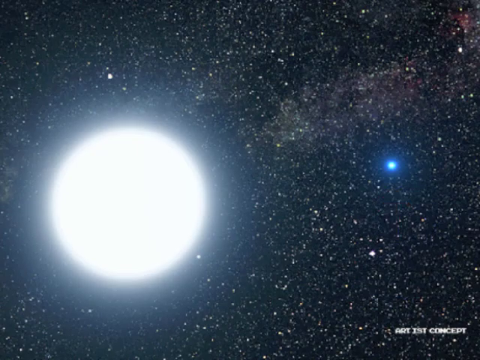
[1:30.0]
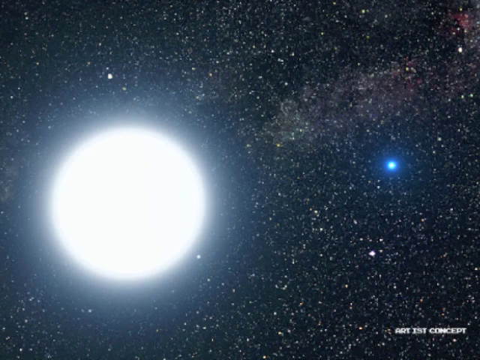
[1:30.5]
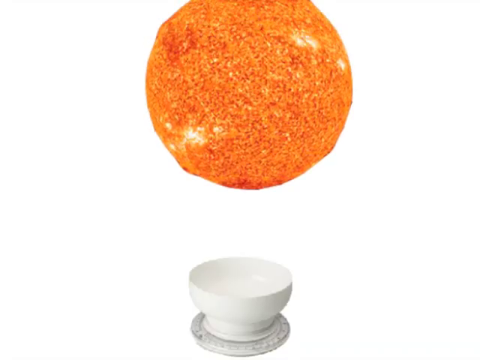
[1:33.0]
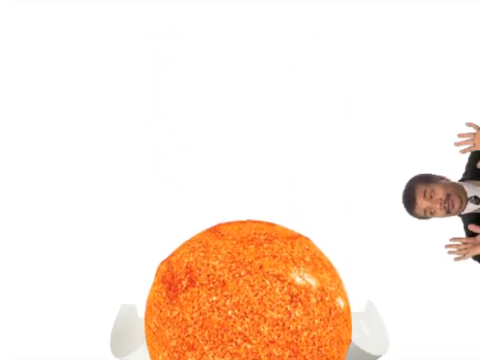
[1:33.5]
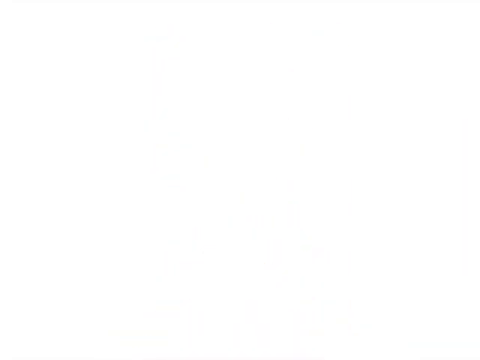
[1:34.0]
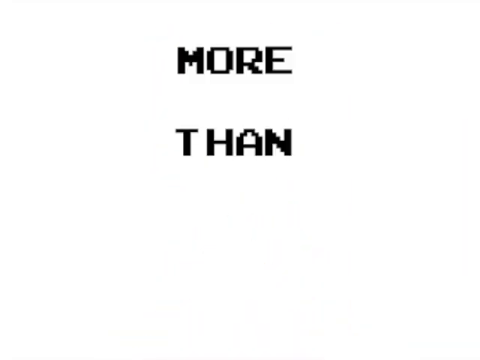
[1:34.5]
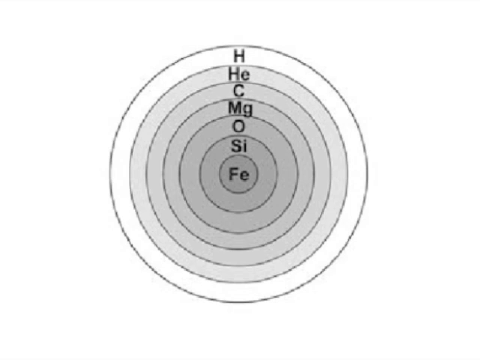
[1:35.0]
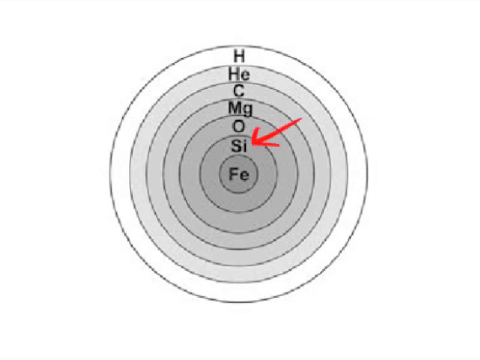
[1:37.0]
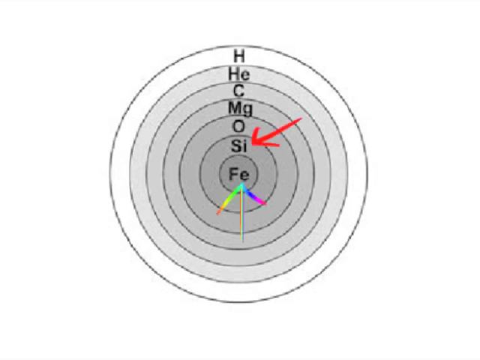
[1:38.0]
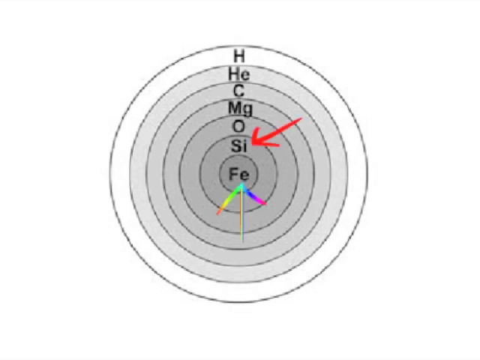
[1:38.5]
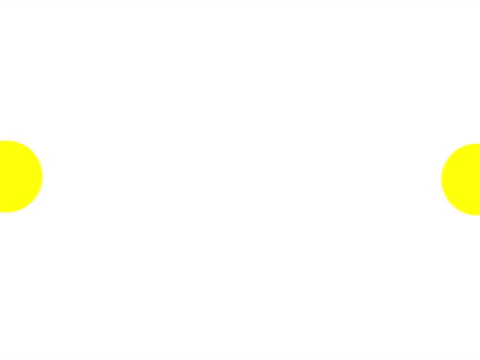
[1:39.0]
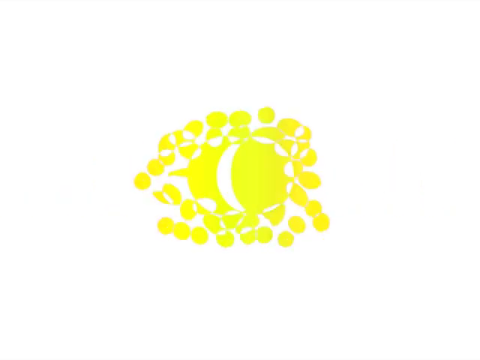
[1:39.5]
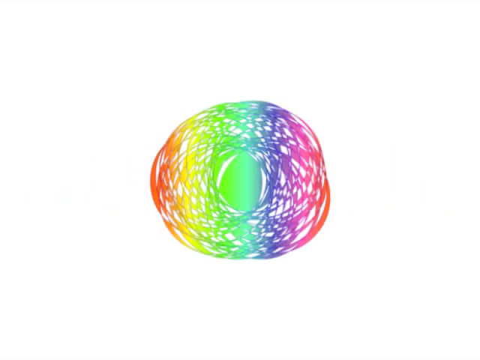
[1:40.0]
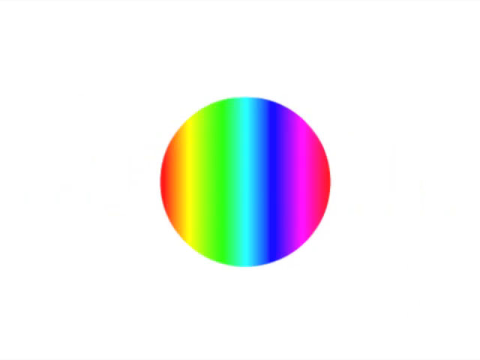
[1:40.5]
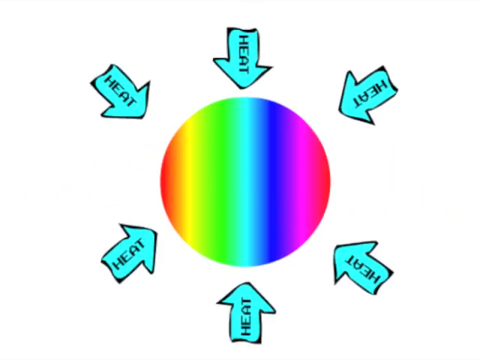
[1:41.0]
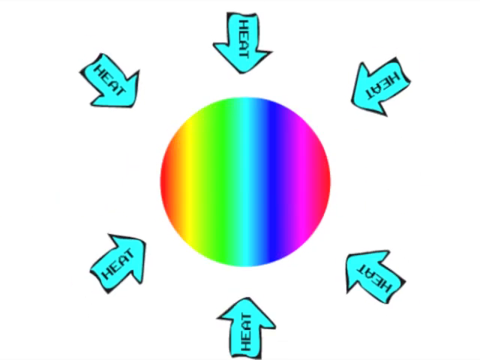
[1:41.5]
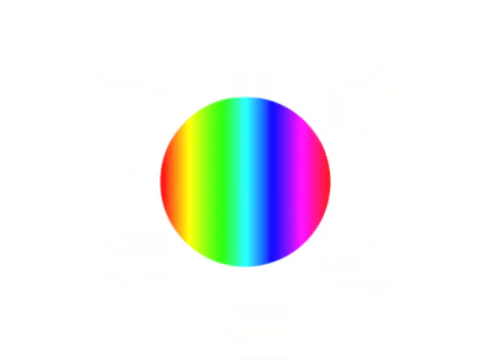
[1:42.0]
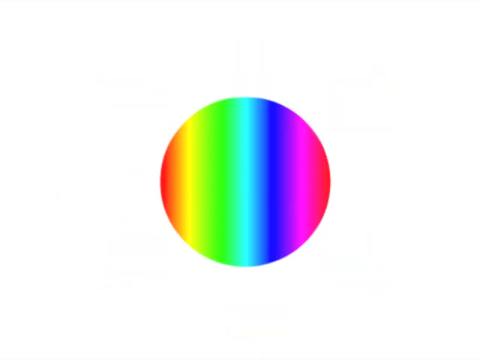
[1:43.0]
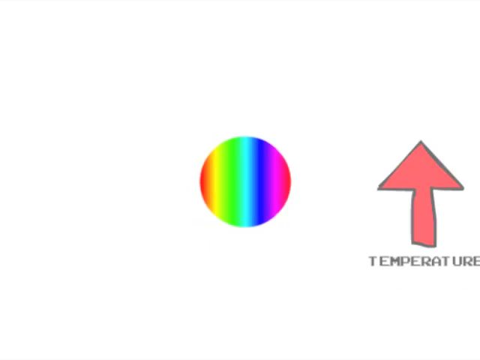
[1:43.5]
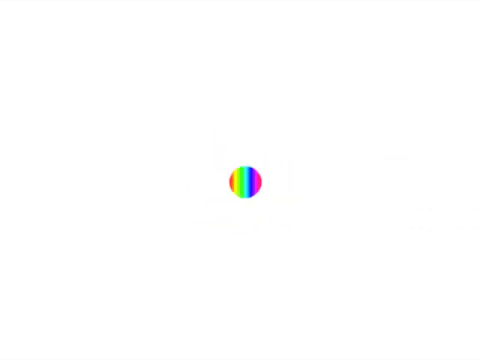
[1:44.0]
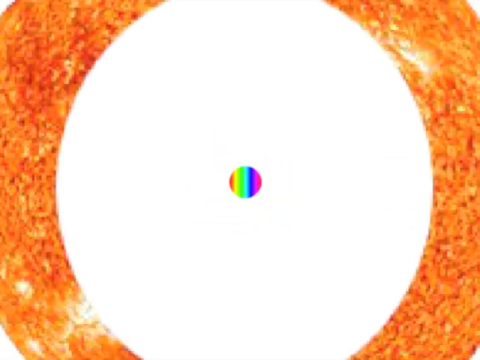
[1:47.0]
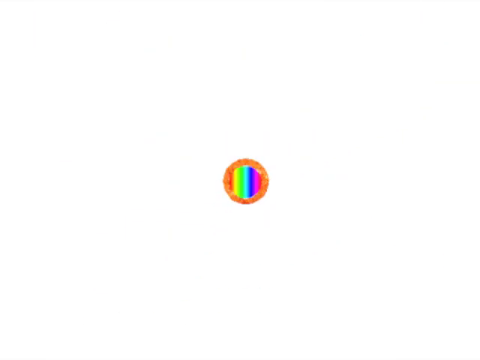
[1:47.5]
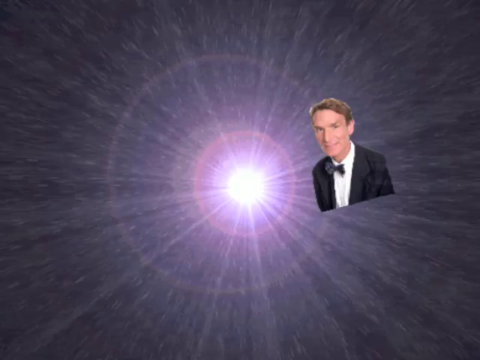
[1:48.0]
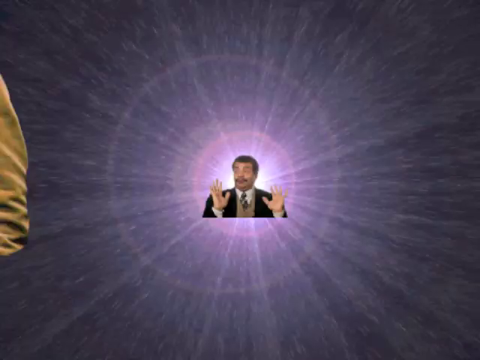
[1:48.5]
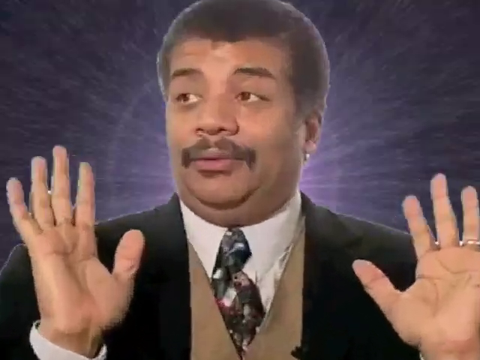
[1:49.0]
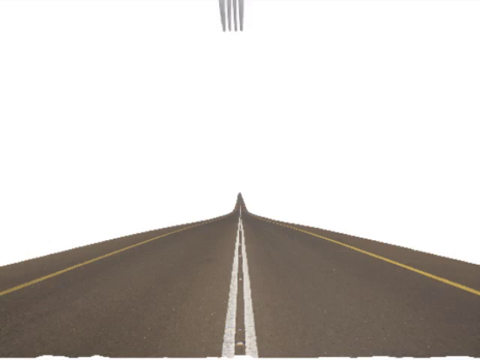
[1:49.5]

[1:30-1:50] A big white orb is on the left side, so bright it is hard to place exactly. A white bowl appears, and an orange globe or blob falls into it. One of the researchers slides in from the right side with his hands up and appears to be looking at it; he is possibly Neil. Words pop up quickly, reading "more than eight solar masses." Layers then appear, each with a different element symbol: H for hydrogen, He for helium, C for carbon, Mg for magnesium, O for oxygen, one that is possibly silicon, and Fe in the middle, apparently for iron.